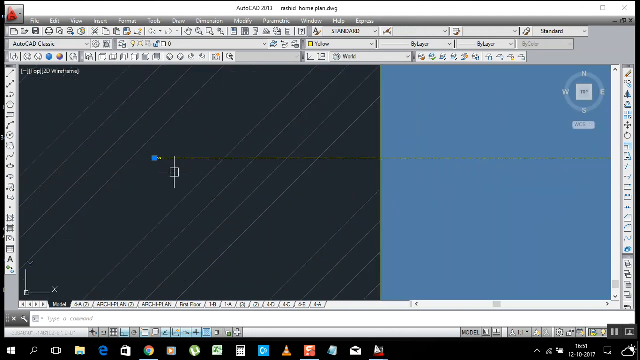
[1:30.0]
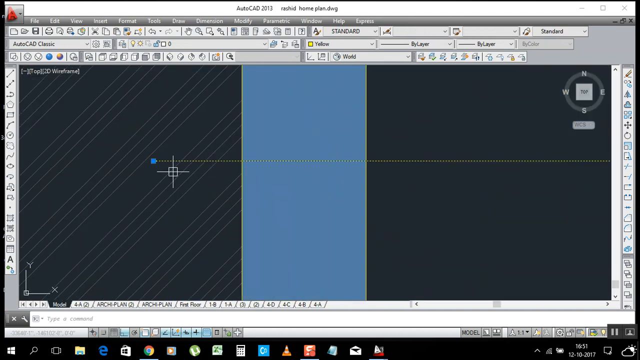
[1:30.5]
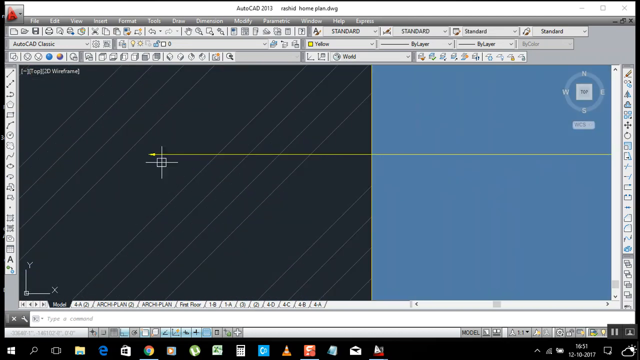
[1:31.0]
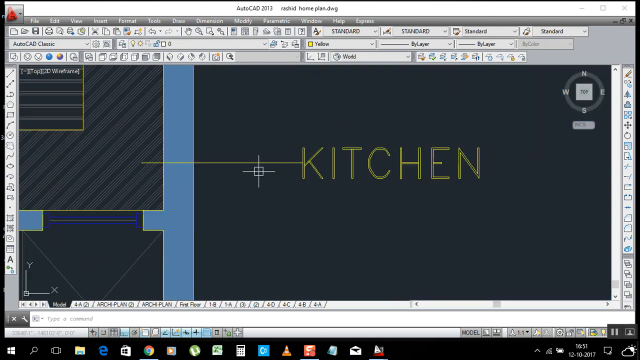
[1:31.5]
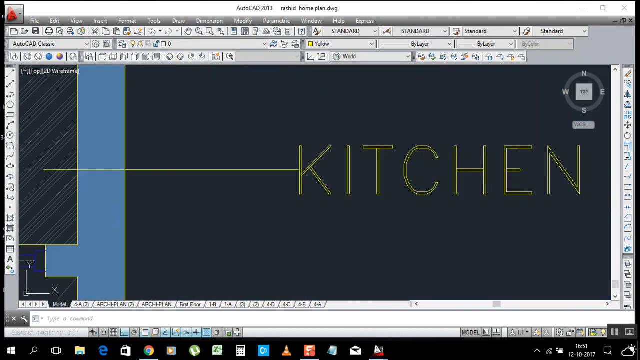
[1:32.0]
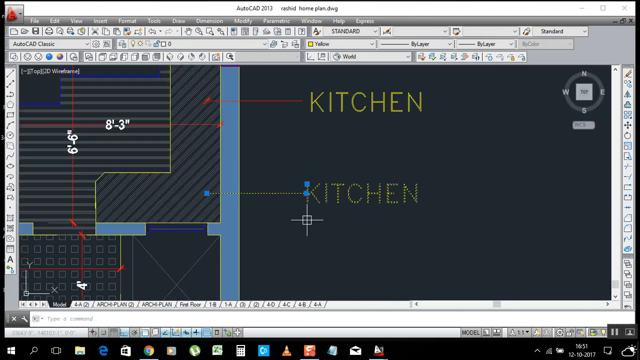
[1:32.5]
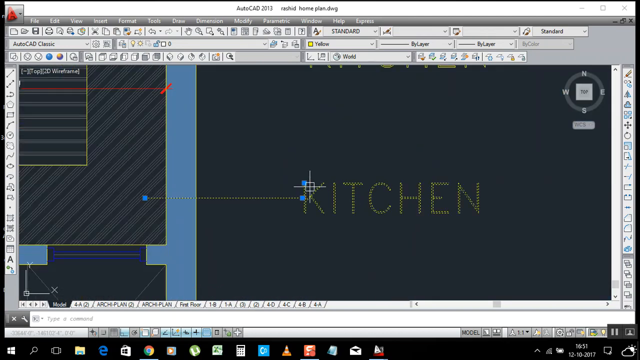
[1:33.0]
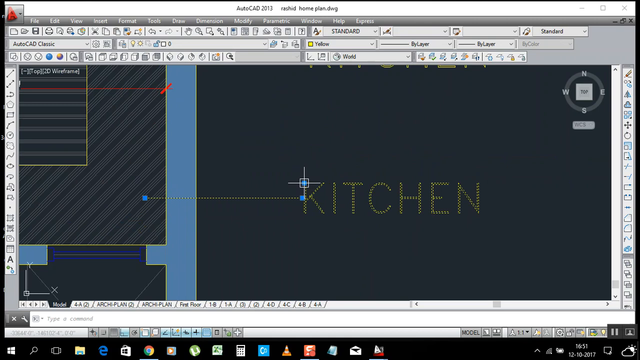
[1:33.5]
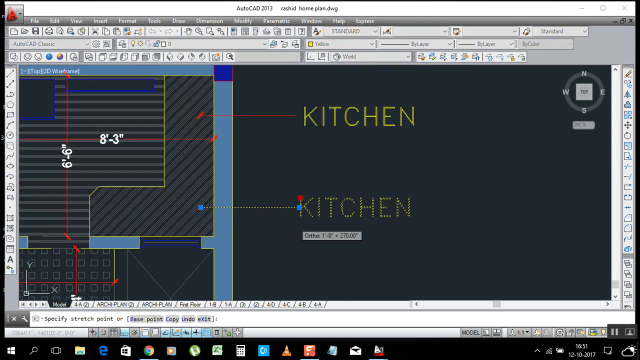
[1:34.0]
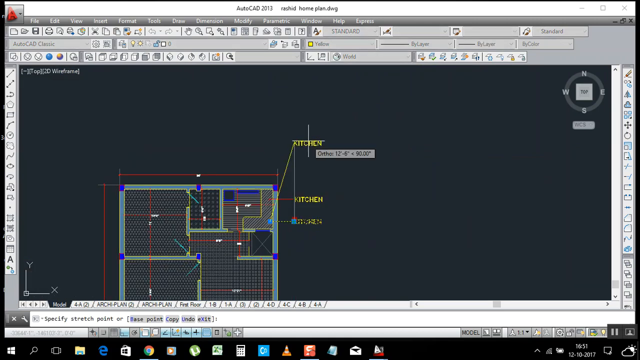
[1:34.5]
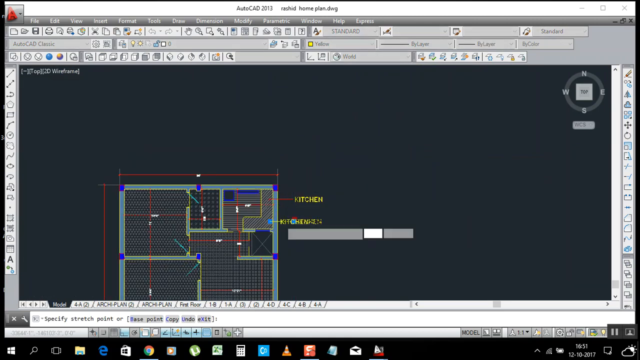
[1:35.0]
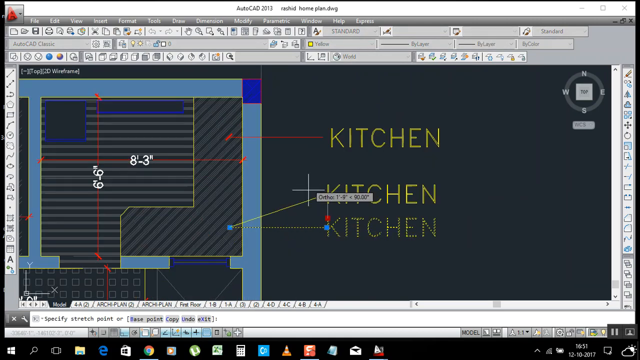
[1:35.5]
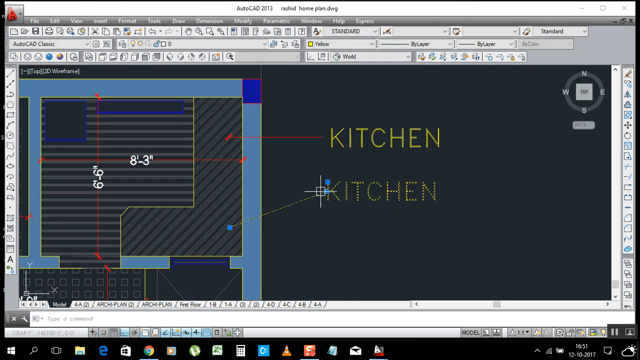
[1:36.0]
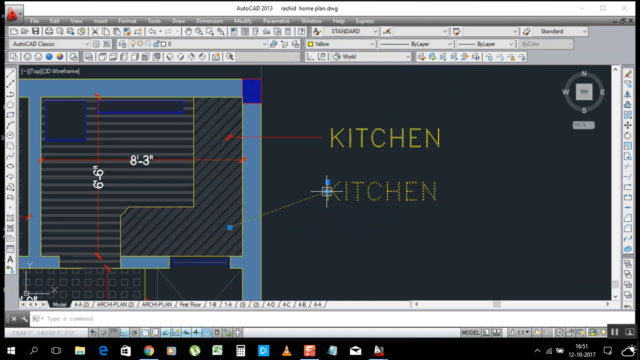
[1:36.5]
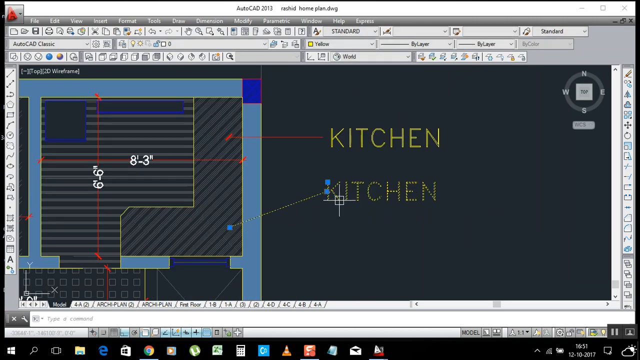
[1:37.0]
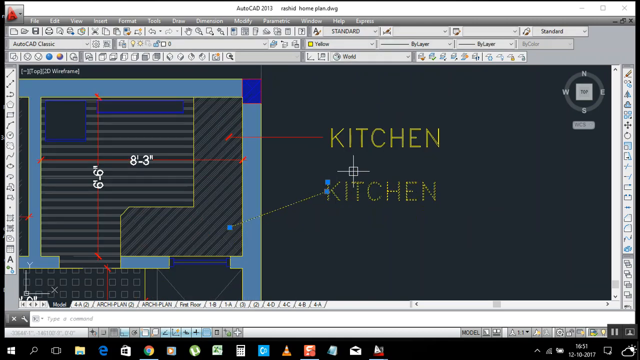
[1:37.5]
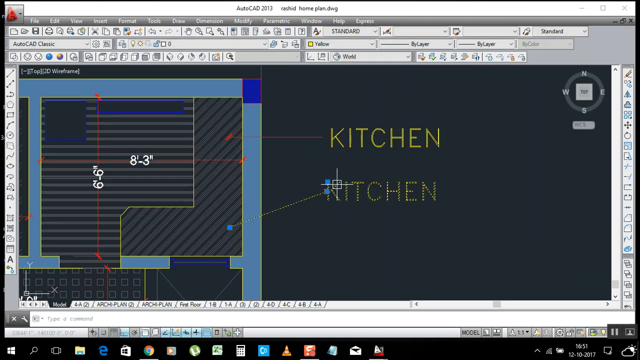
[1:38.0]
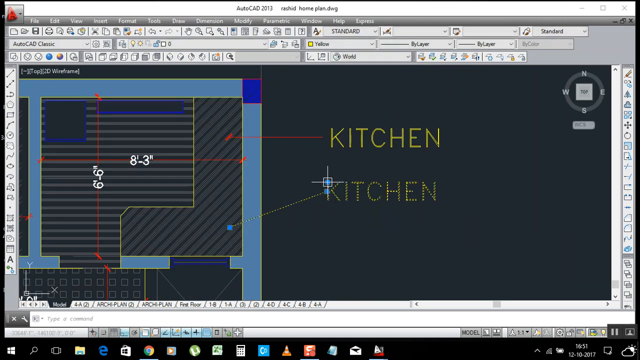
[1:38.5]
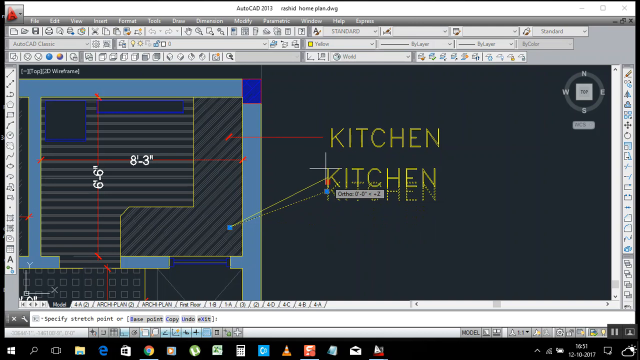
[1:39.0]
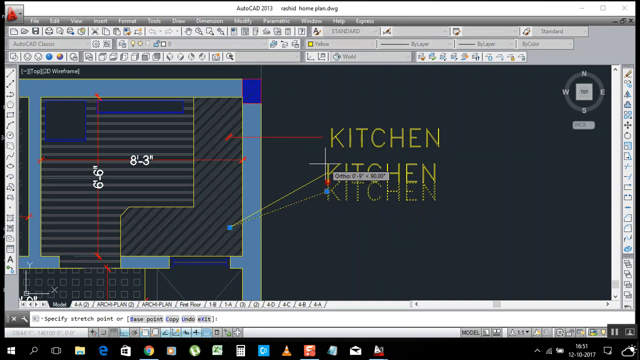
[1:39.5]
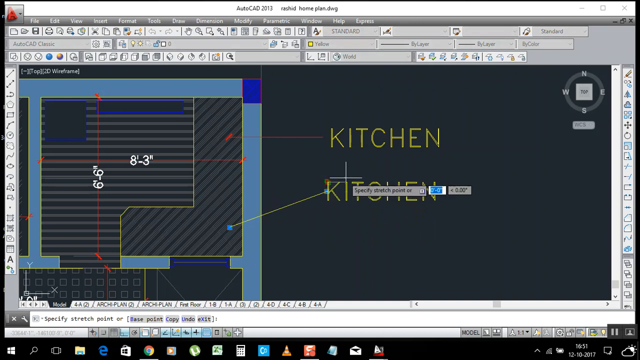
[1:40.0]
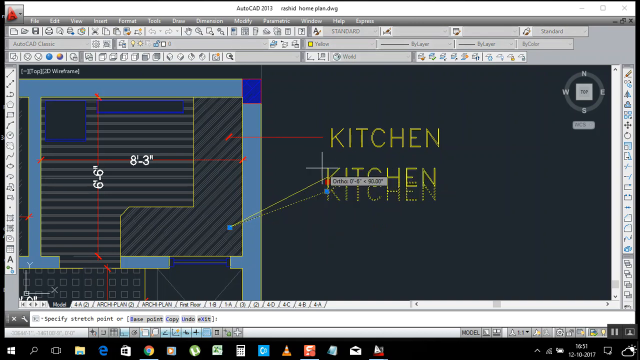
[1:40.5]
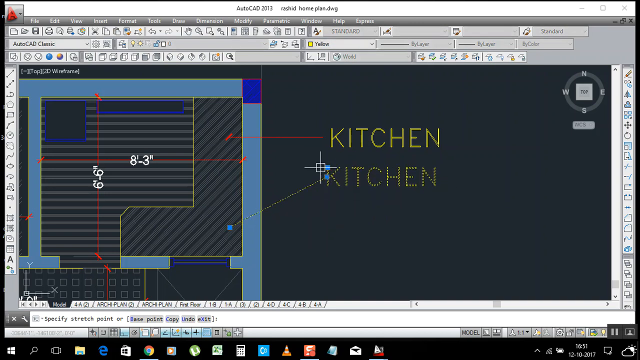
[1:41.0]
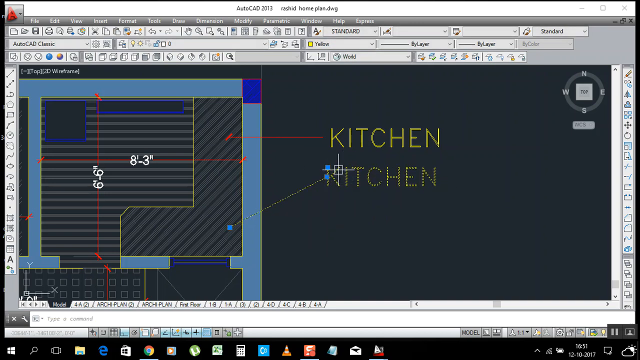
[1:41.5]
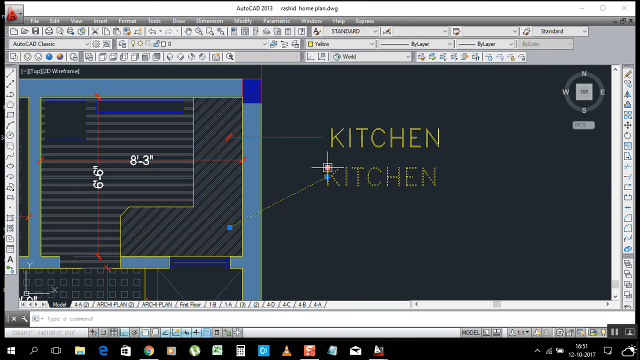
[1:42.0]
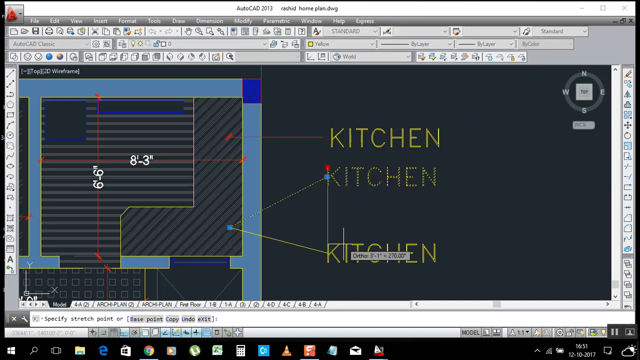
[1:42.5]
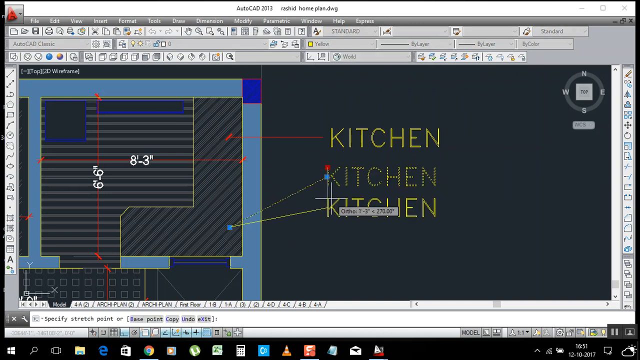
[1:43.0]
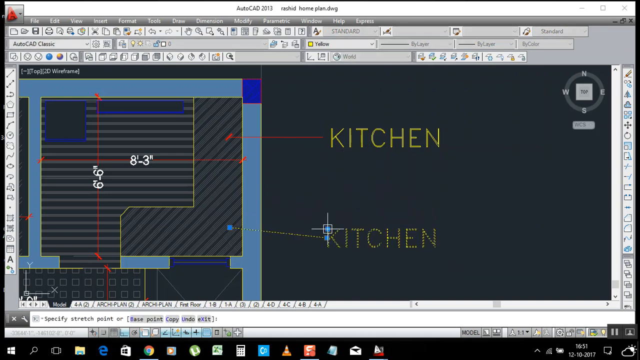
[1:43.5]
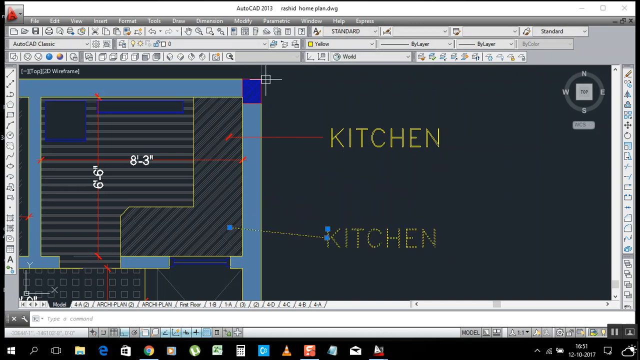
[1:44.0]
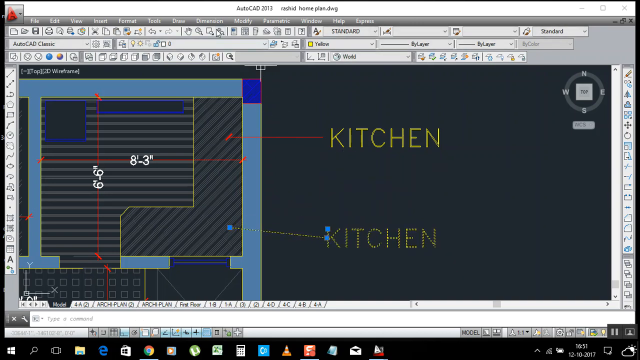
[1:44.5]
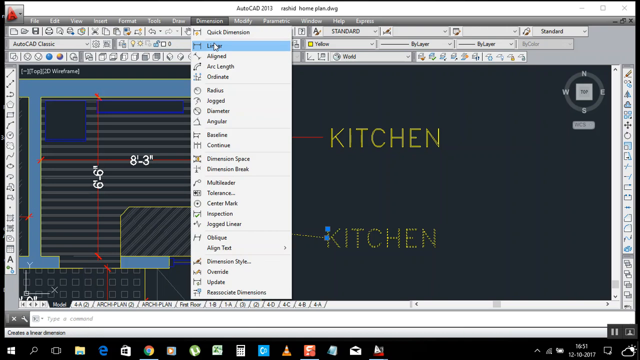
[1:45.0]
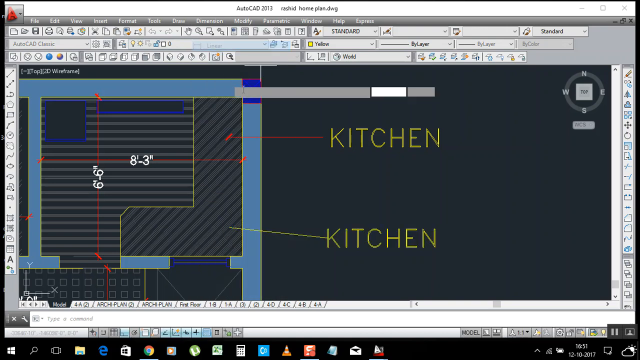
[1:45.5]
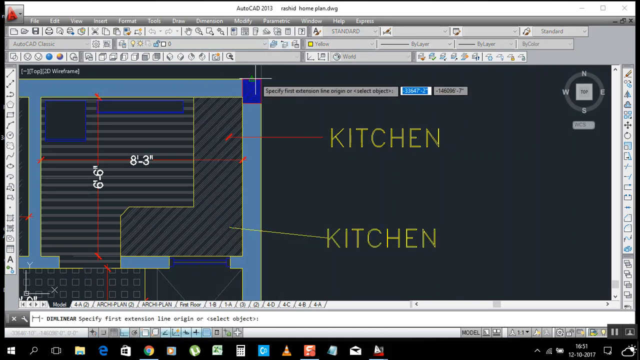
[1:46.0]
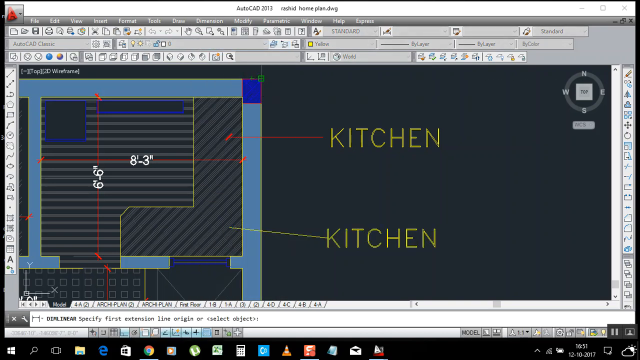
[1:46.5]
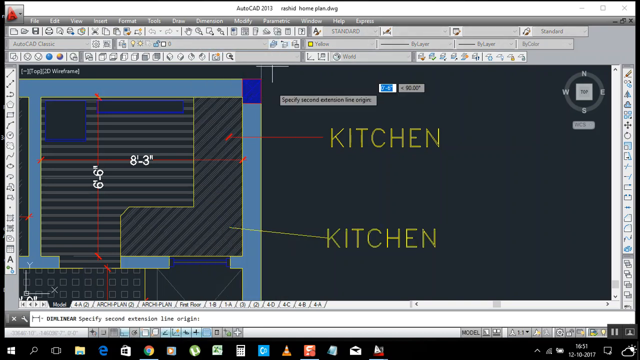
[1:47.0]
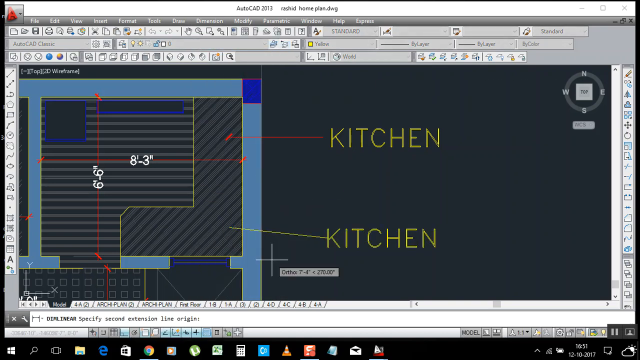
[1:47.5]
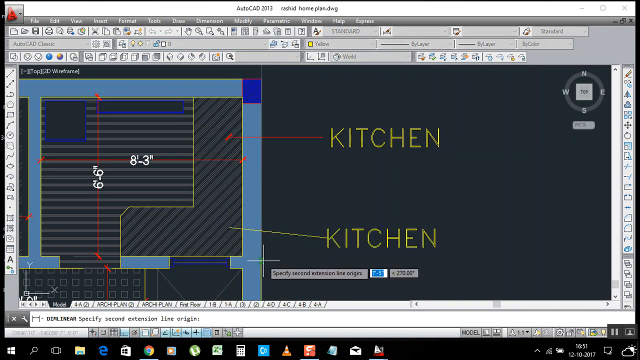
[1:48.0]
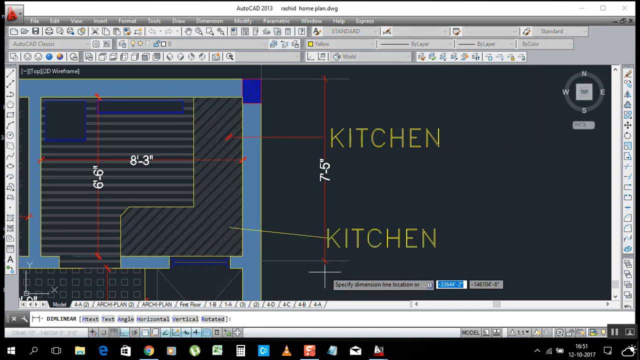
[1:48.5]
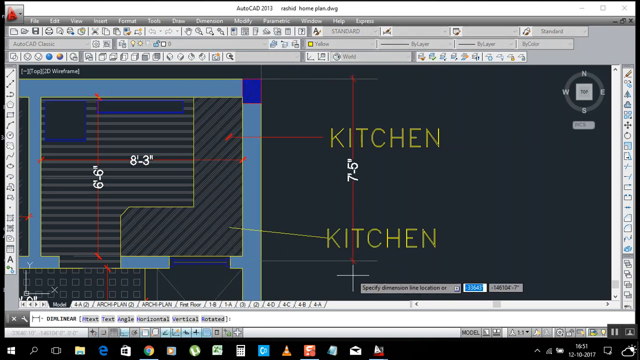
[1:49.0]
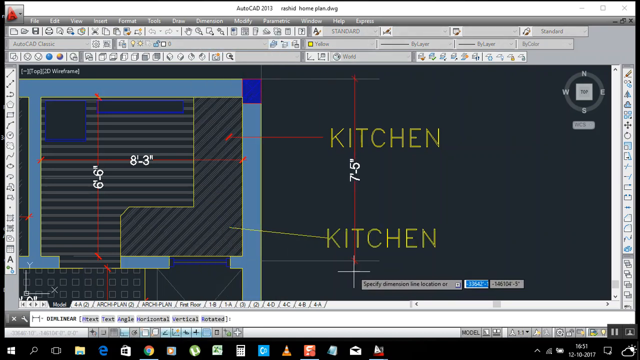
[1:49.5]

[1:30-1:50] The yellow horizontal line turns into a dotted line while it is being edited and becomes solid when deselected. The arrow itself then seems to be manipulated, its end grabbed. The word kitchen is moved around, and the arrow stays connected to it wherever it goes, always linking the kitchen area on the CAD diagram and the word kitchen. The mouse continues moving around, then goes up to the dimension menu again, scrolls down the options, and clicks the option labeled "Linear". A vertical red line is drawn with a label that says "seven feet five inches", and it appears to auto-label the line's length as it is drawn.